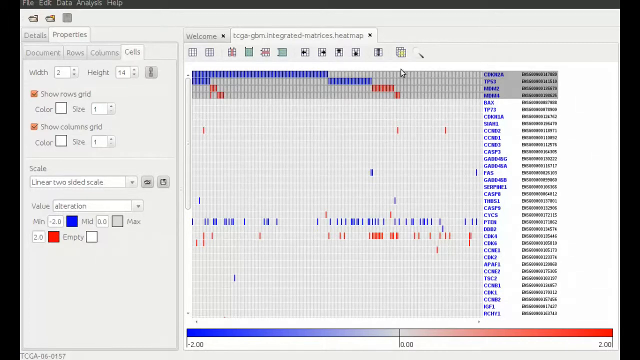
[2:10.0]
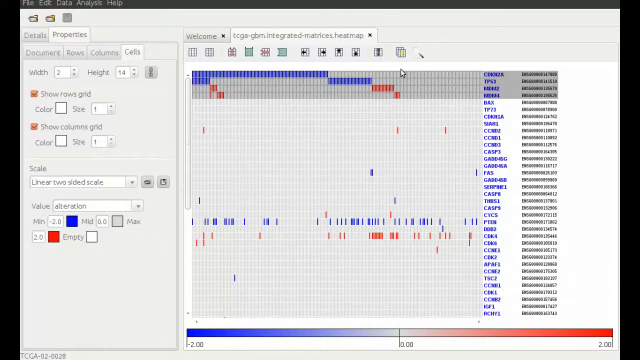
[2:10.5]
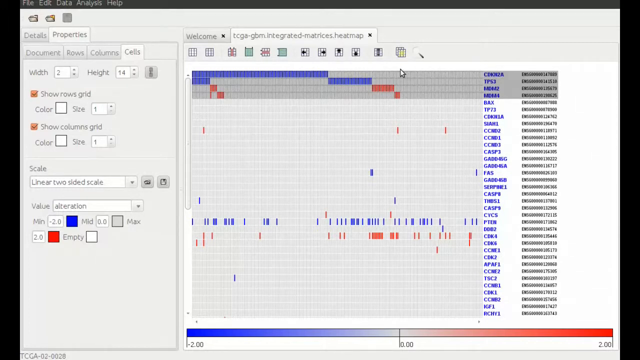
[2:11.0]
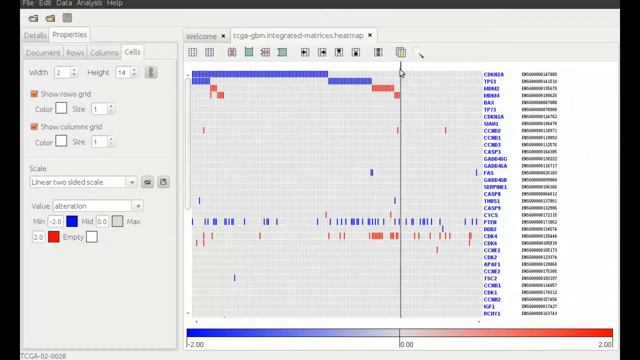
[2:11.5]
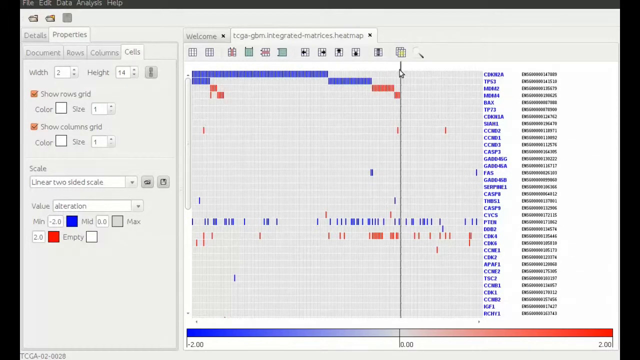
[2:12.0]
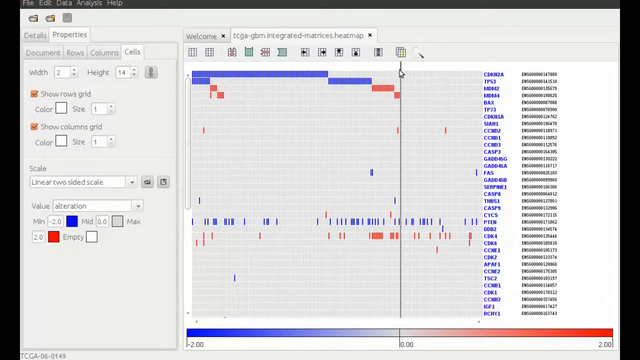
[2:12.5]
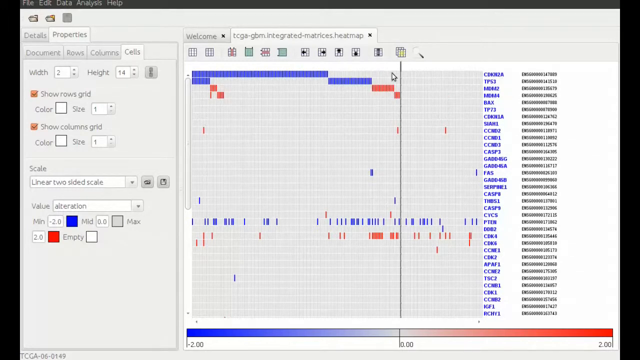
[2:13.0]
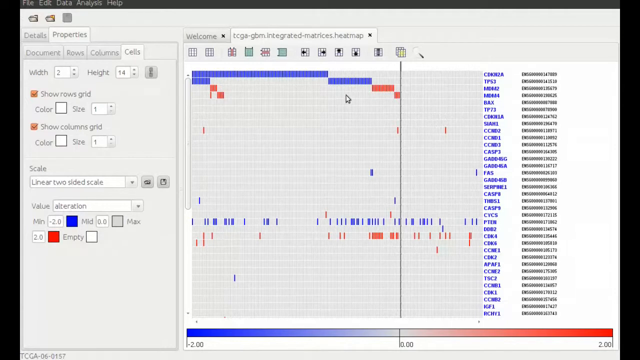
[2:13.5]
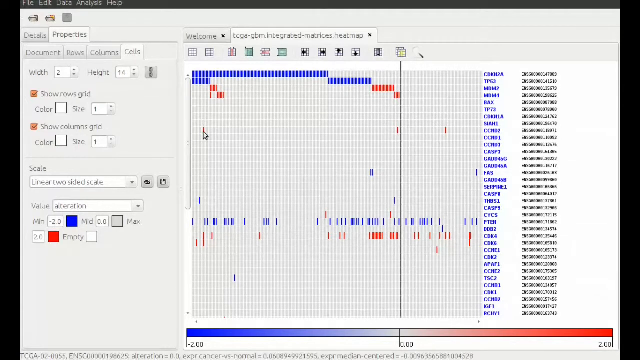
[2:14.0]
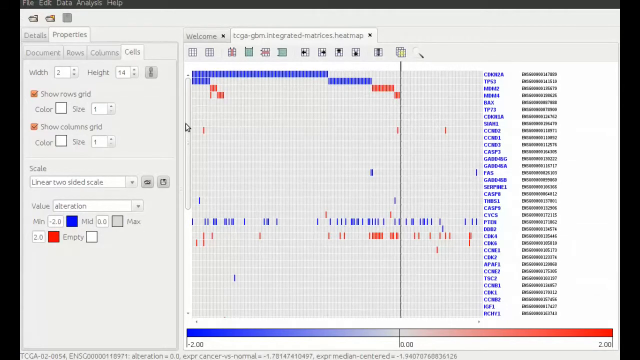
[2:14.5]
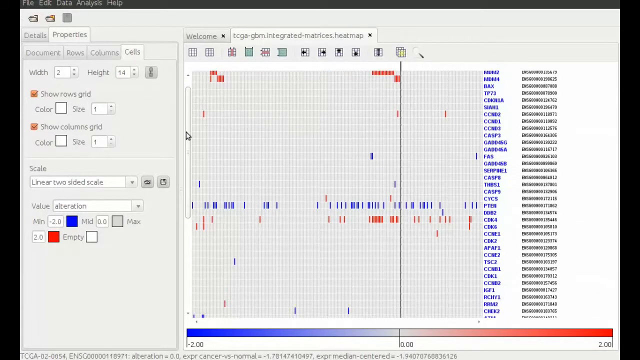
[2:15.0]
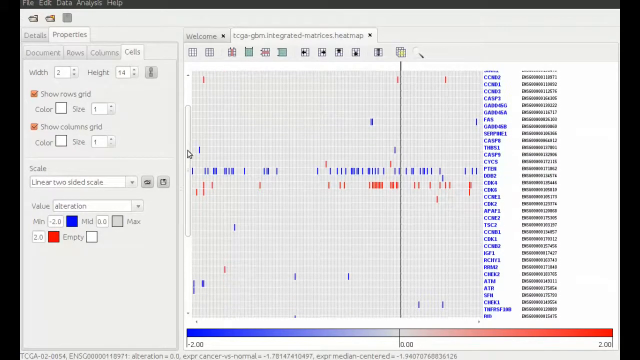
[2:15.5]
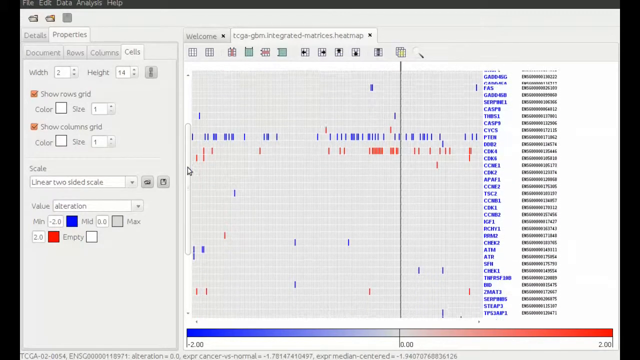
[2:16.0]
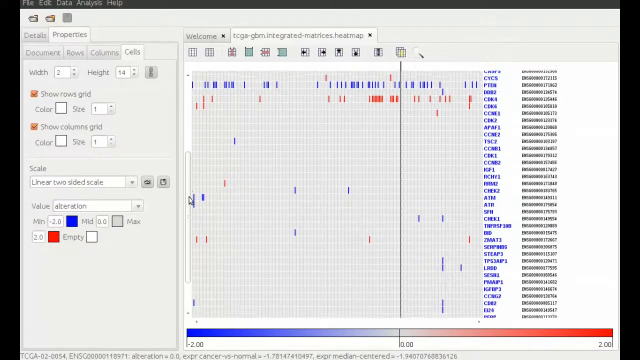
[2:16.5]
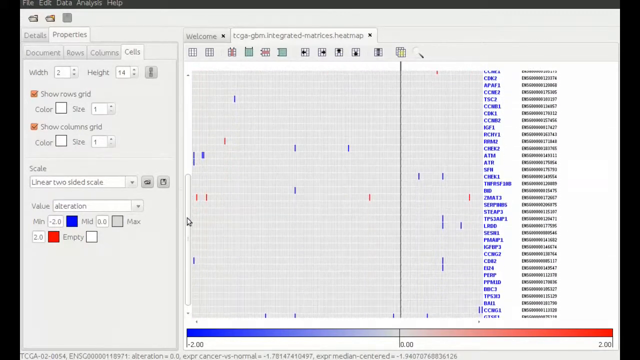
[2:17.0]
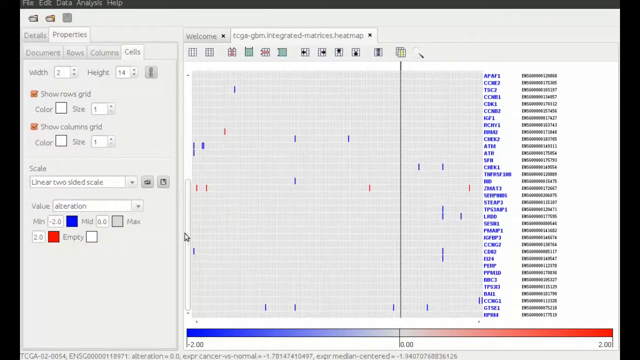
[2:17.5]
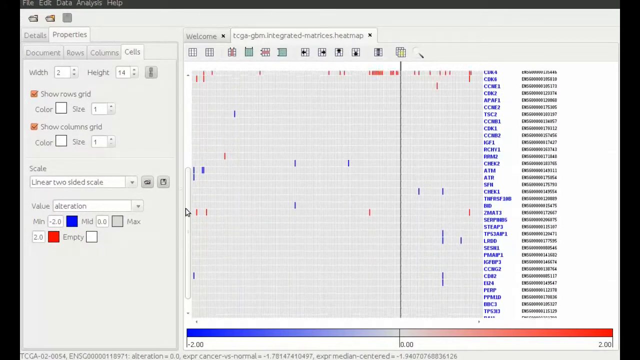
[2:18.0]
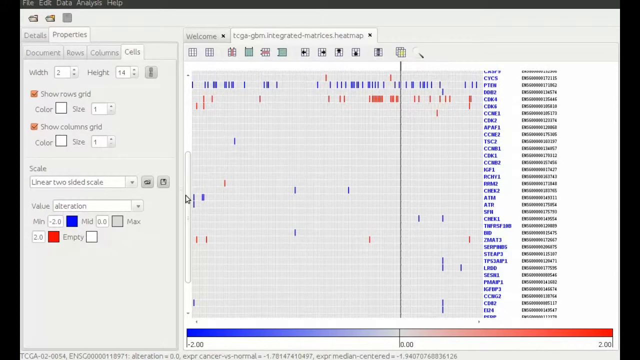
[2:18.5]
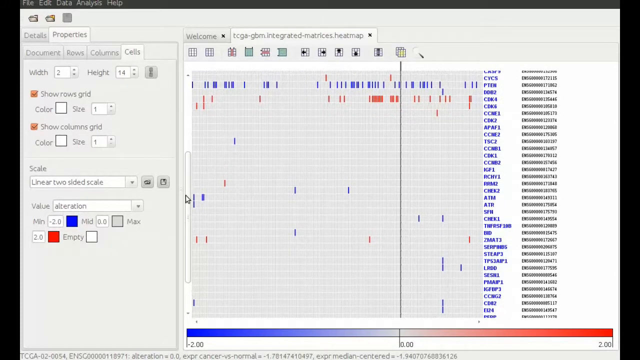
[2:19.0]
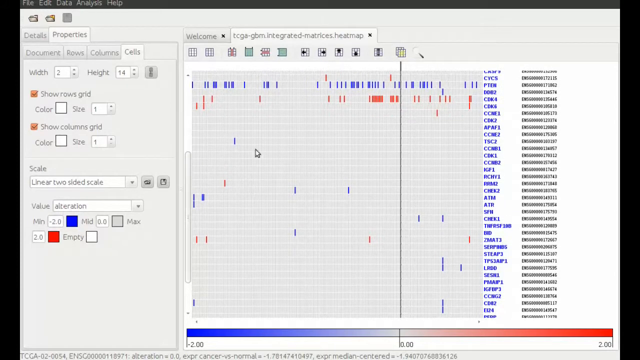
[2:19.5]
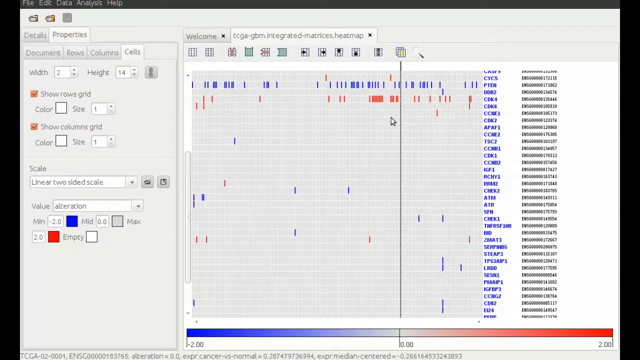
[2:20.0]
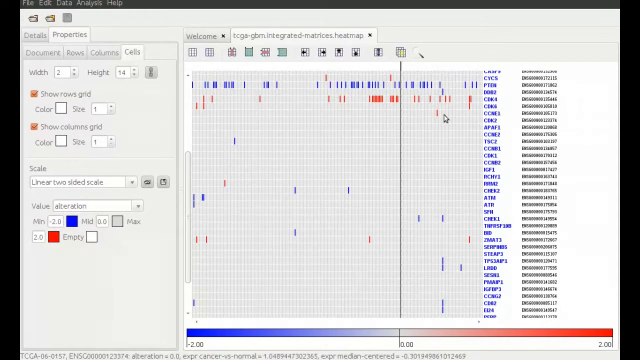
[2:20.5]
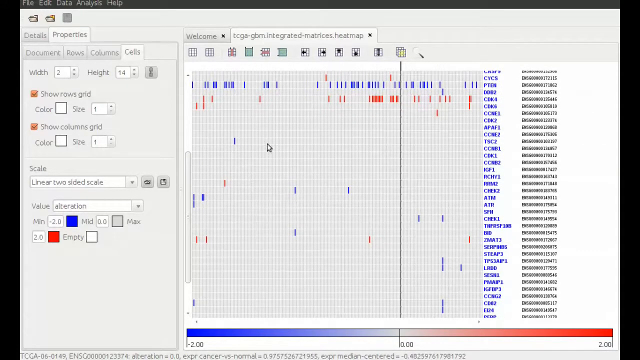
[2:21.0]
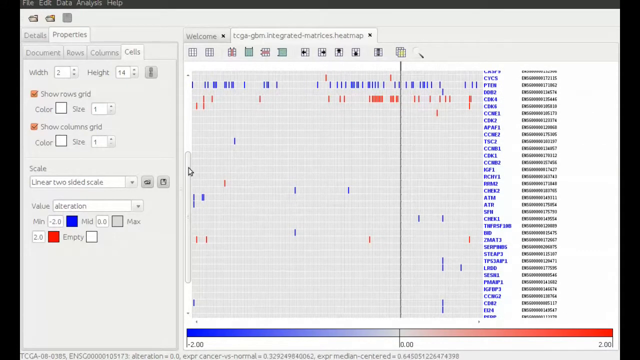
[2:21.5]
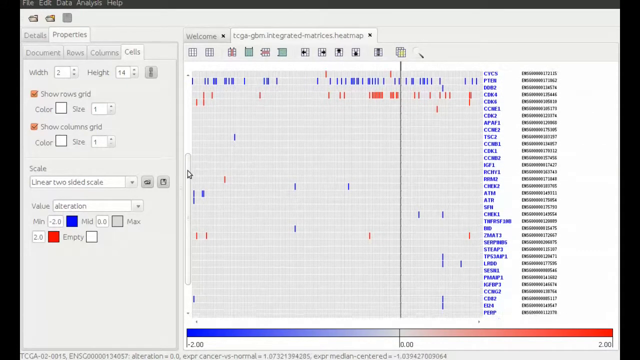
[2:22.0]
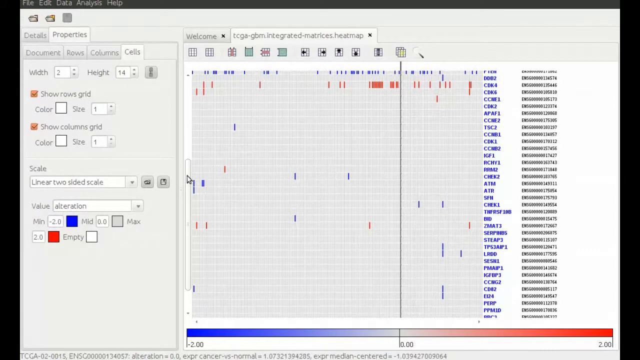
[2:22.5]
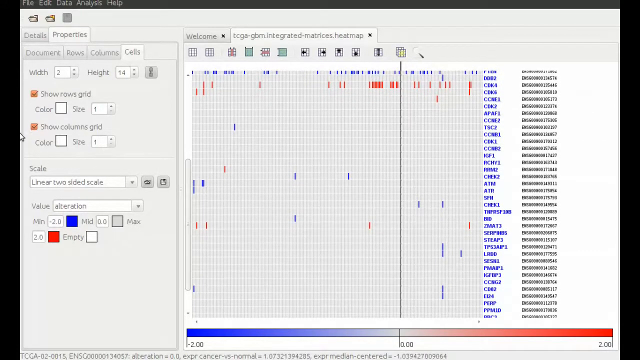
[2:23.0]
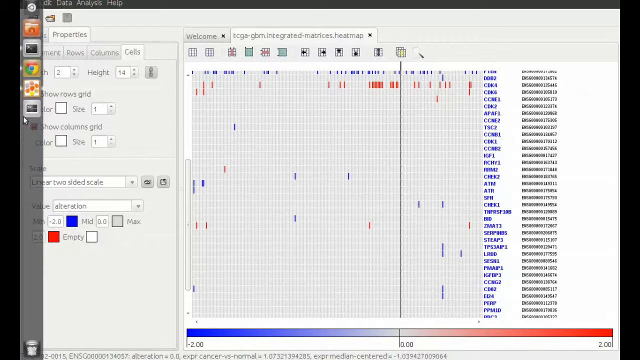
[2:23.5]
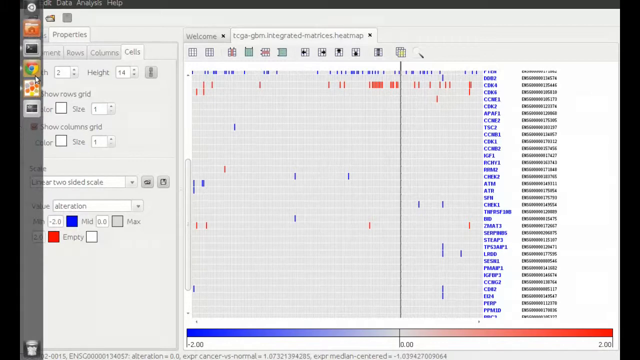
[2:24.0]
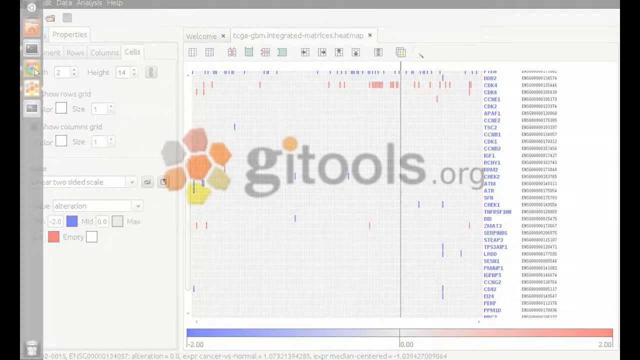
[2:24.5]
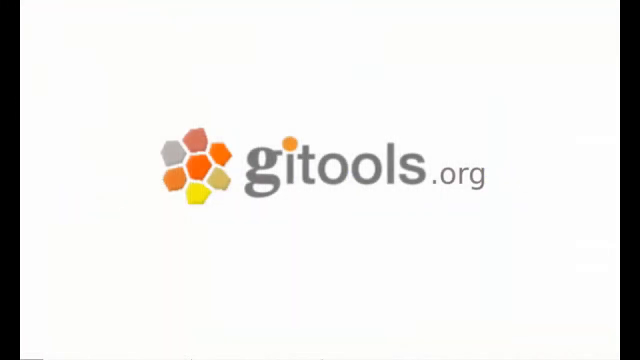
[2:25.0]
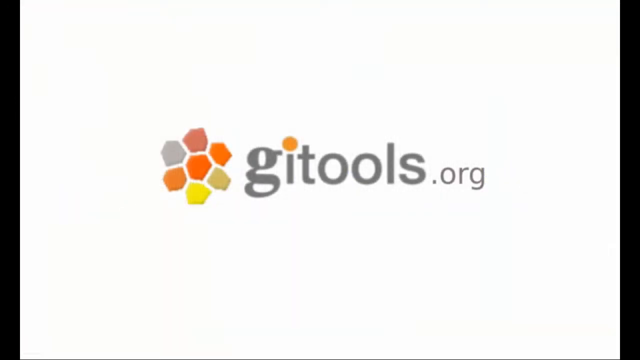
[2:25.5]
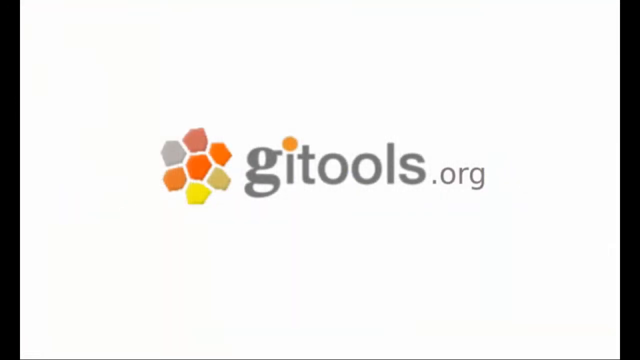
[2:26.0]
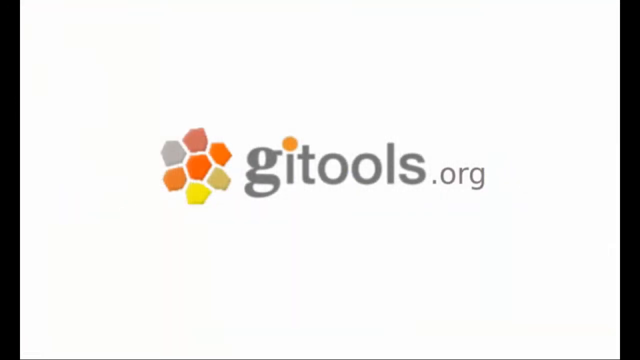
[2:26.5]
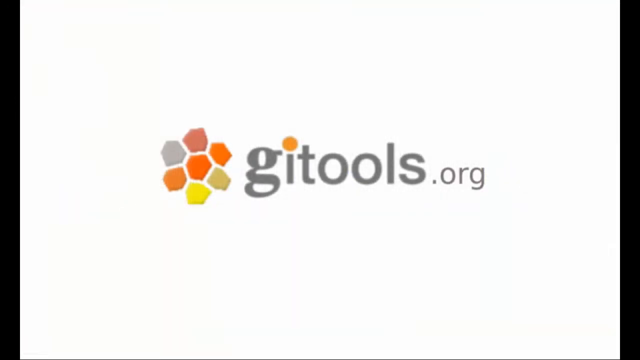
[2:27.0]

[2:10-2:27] The user kind of clicks toward the top right of the heat map, which draws a vertical line extending to the top and bottom of the heat map. The user then kind of scrolls downwards through the rest of the map, to about the midway-to-bottom point, moves the mouse to the left again, and clicks the Google Chrome browser. The video ends by transitioning to a screen with a white background showing the Gitools website, gitools.org, in the center, with the Gitools logo to its left: a flower that is orange in the center with orange, red, gray, yellow and light brown petals. It seems to be a demonstration of sorting different labels using the Gitools app.